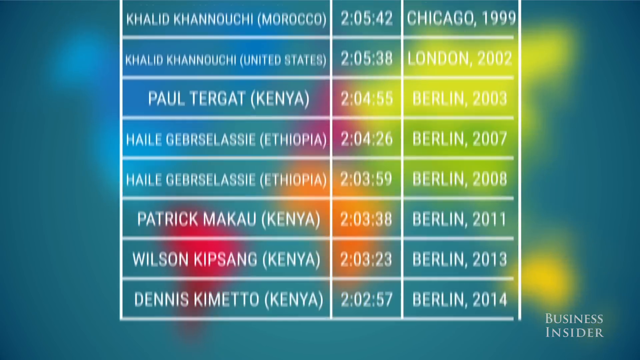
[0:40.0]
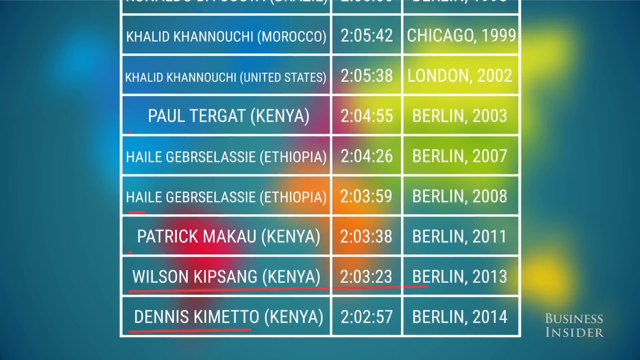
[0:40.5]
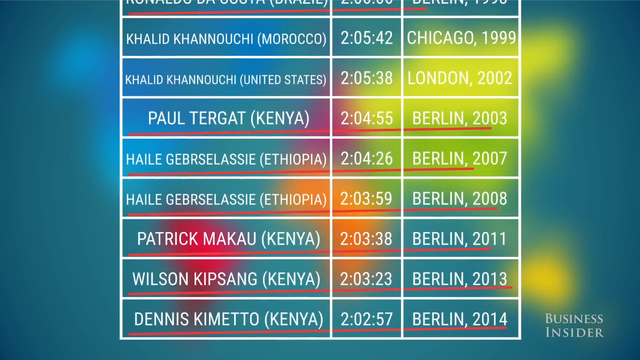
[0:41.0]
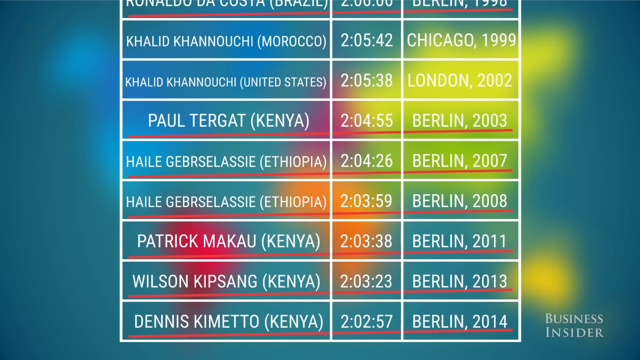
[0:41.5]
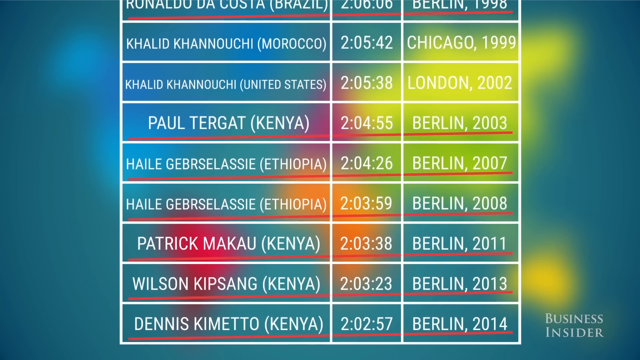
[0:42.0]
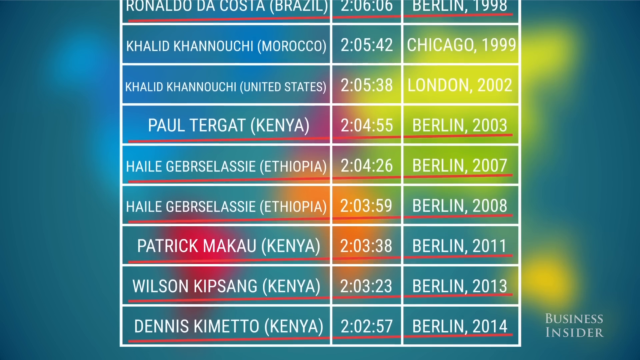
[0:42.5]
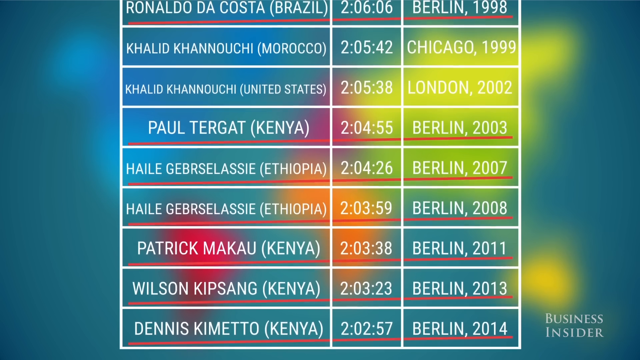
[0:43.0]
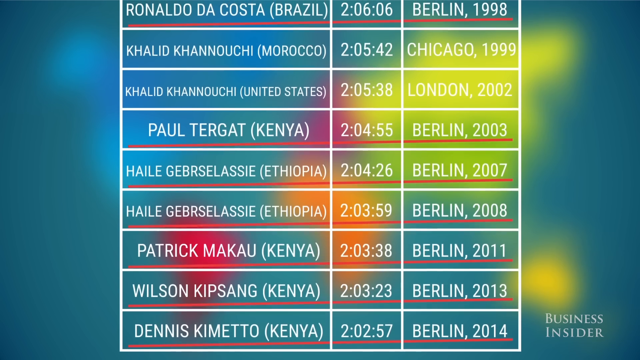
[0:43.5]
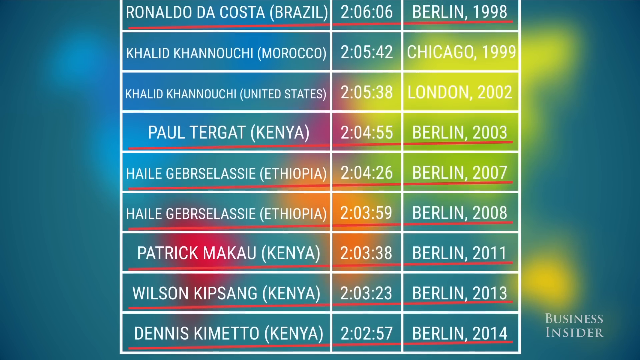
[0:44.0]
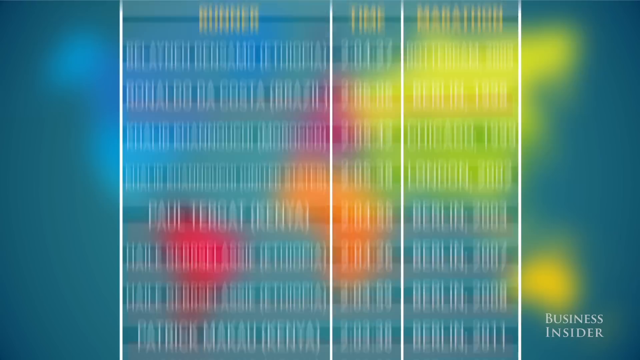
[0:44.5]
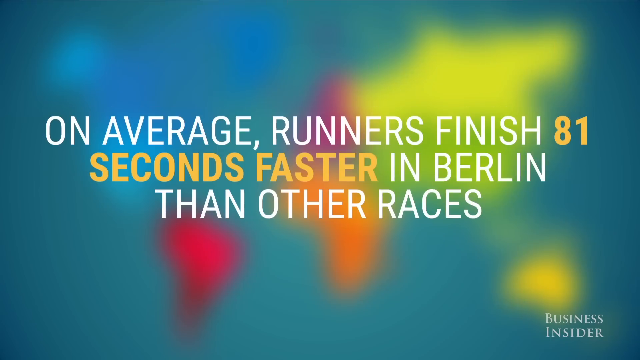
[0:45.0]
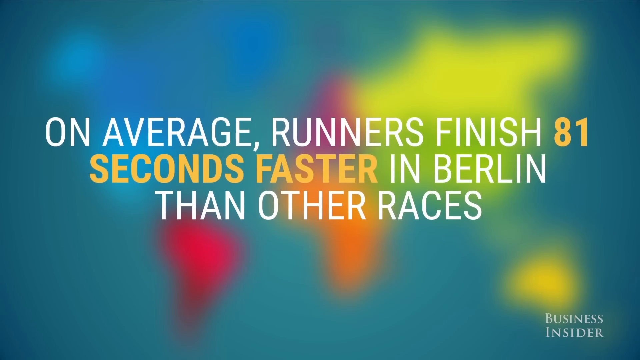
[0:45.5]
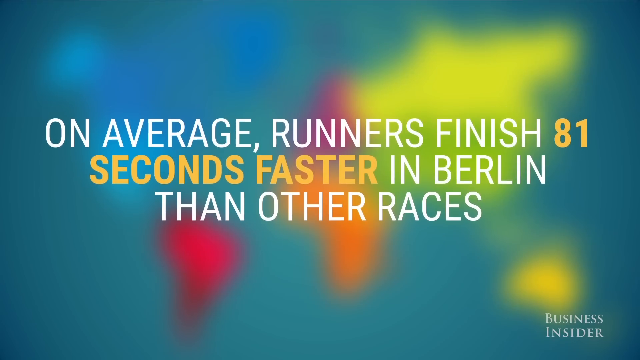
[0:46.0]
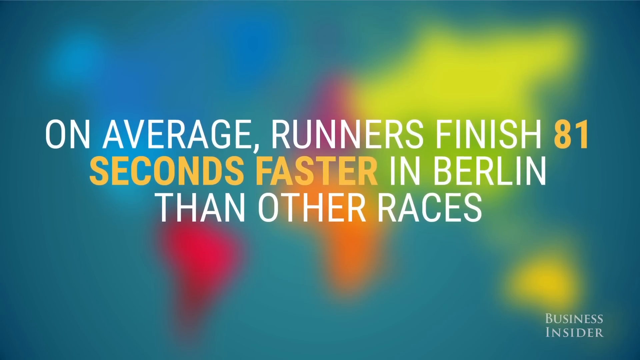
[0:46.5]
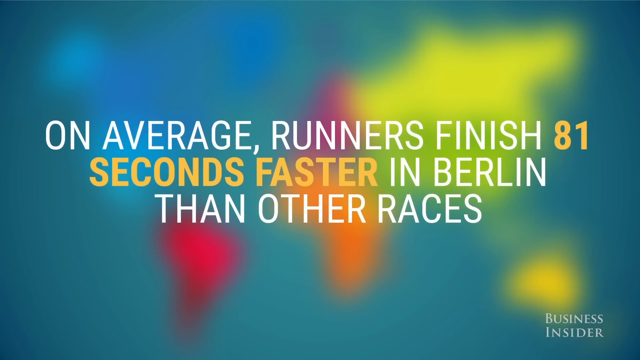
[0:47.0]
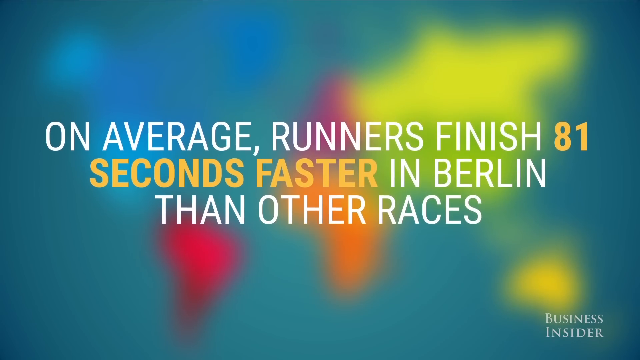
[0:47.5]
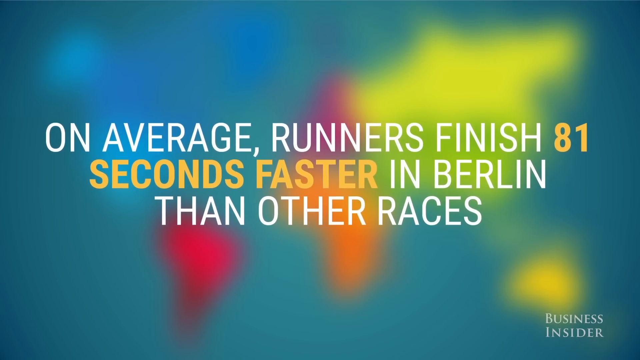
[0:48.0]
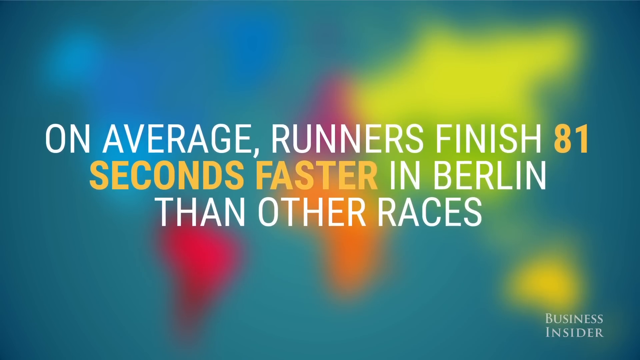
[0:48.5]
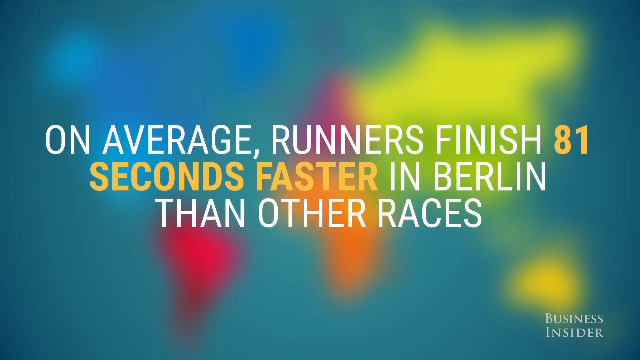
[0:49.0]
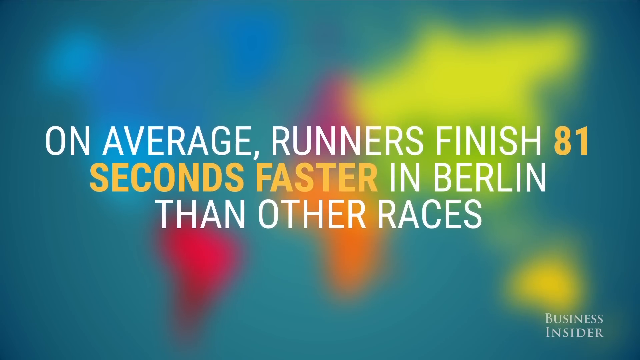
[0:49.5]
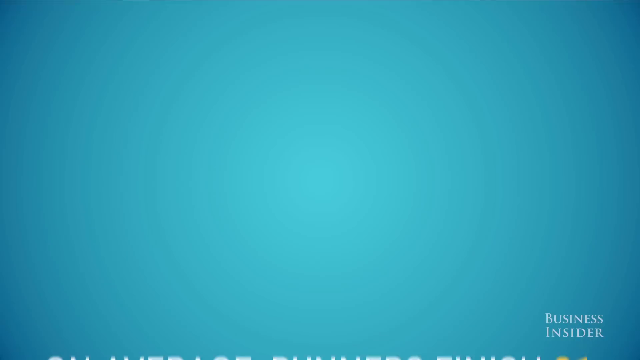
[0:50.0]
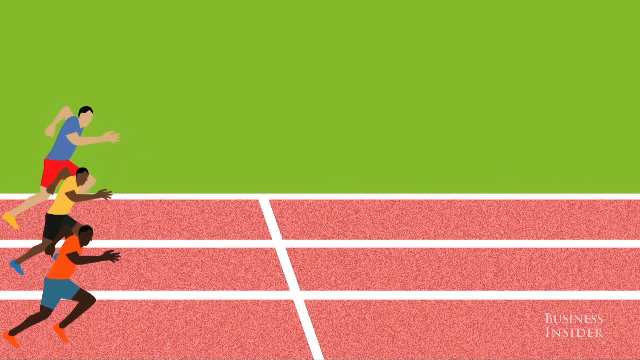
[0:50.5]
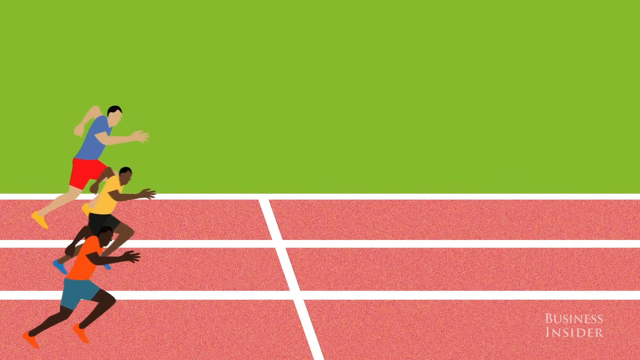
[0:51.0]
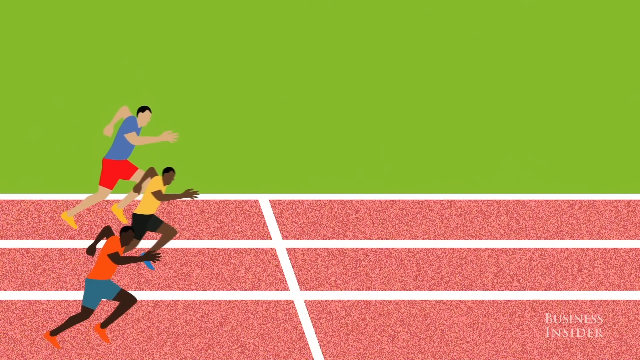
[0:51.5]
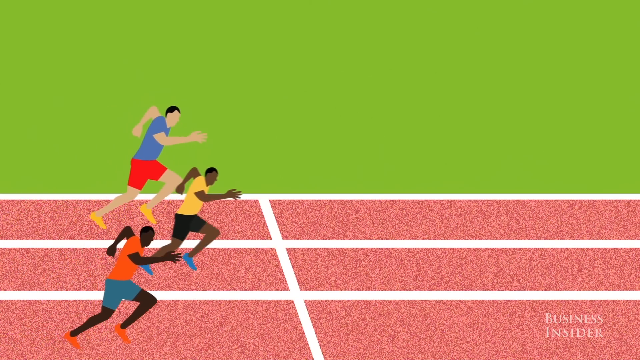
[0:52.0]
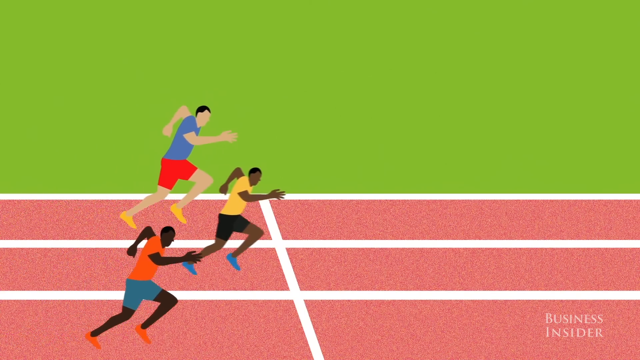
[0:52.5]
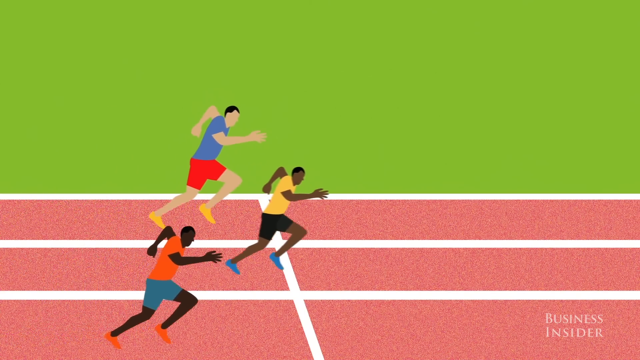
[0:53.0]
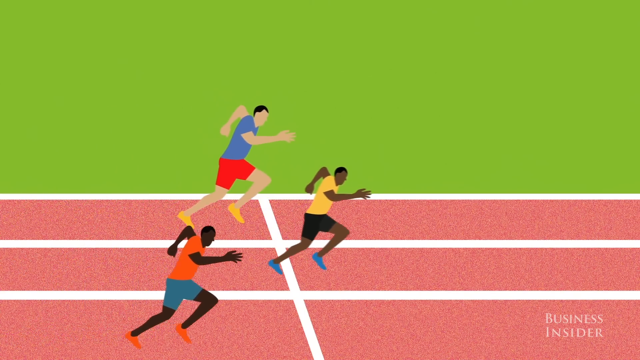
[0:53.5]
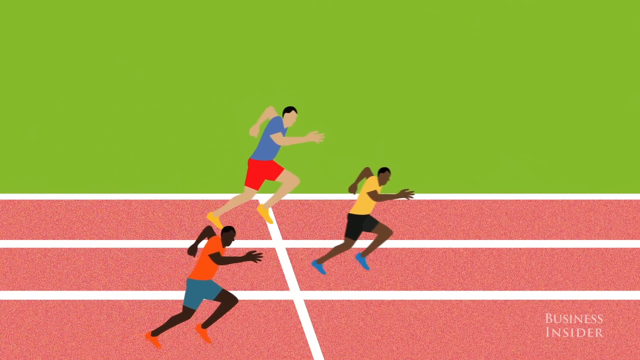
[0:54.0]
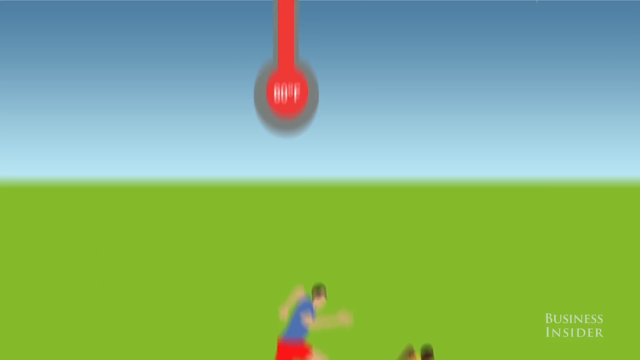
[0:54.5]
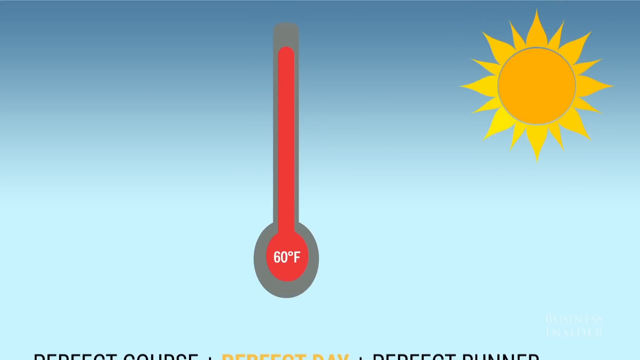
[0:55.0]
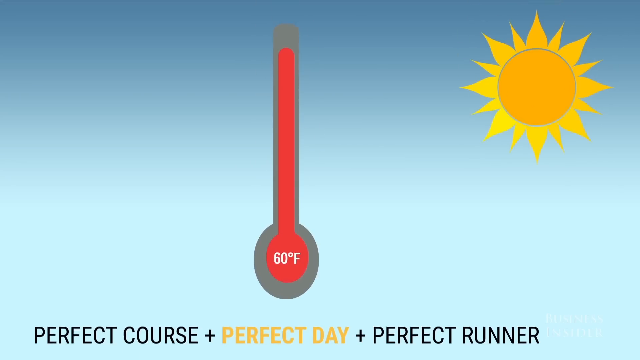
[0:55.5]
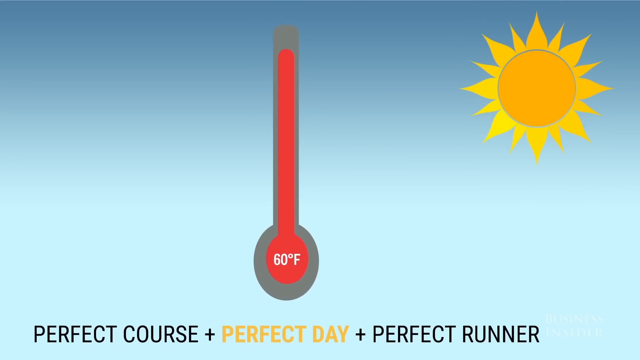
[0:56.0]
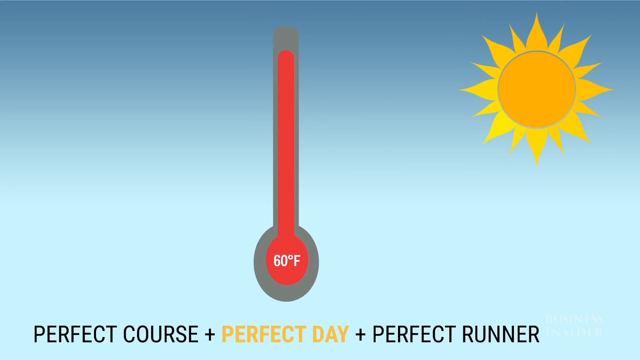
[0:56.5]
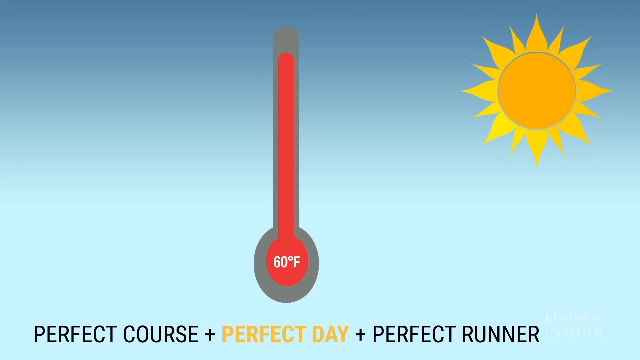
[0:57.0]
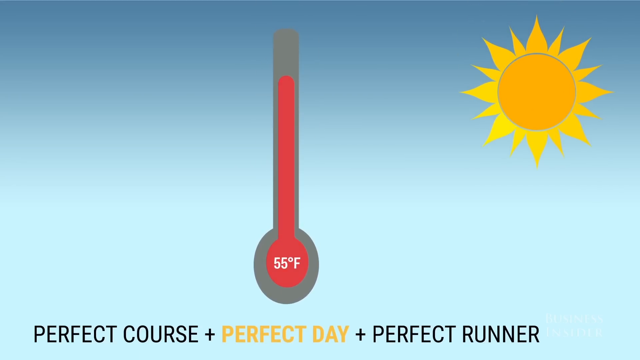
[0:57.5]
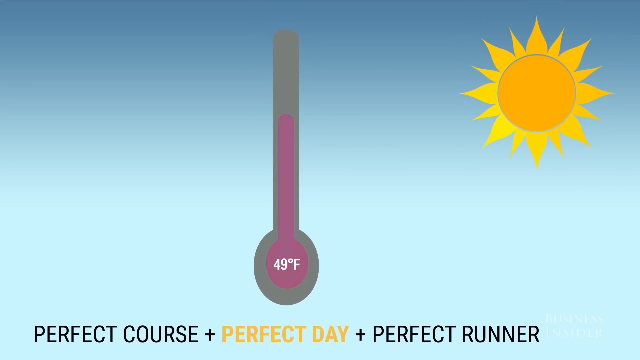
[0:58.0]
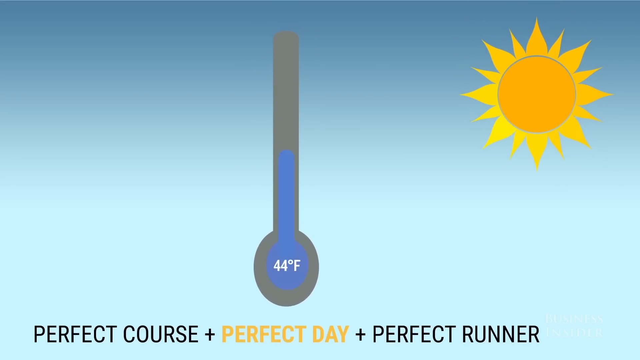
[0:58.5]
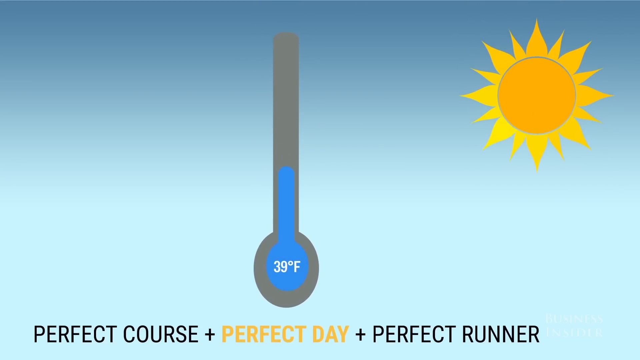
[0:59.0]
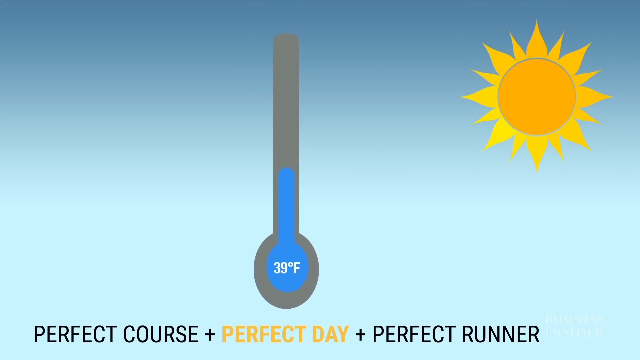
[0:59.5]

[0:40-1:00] A list shows the times of different runners, apparently in marathons, along with which marathon they ran. All of them are a little over 2 hours and very close together; the top runner seems to be the slowest, at 2 hours, 5 minutes and 42 seconds. The runners are mainly from Morocco, Kenya and Ethiopia, with one from the United States and one from Brazil. Text reads "on average runners finish 81 seconds faster in Berlin than other races." A small animation shows three men running. Next comes a picture of a sun and something like a thermometer reading 60 degrees Fahrenheit, and the temperature drops to 39 degrees Fahrenheit.